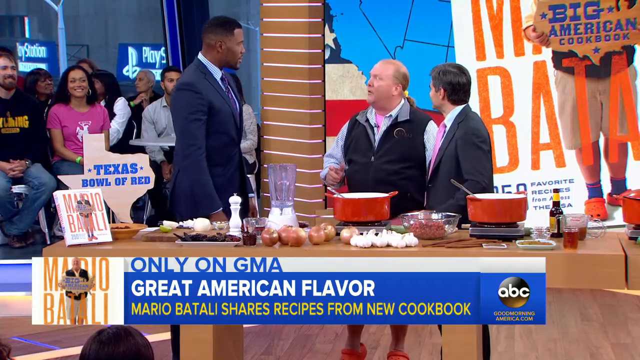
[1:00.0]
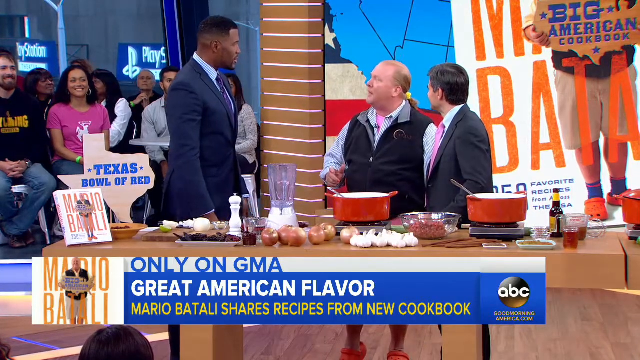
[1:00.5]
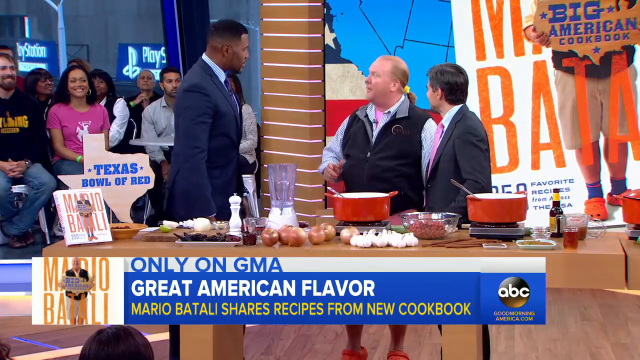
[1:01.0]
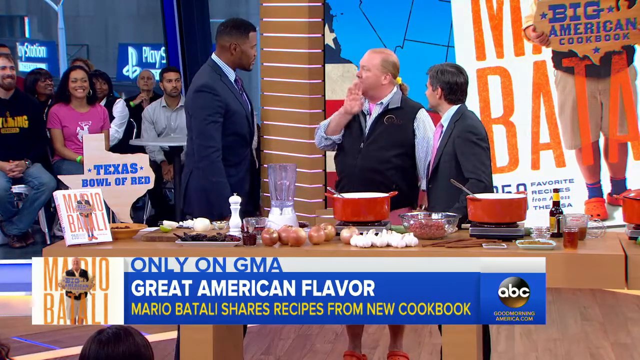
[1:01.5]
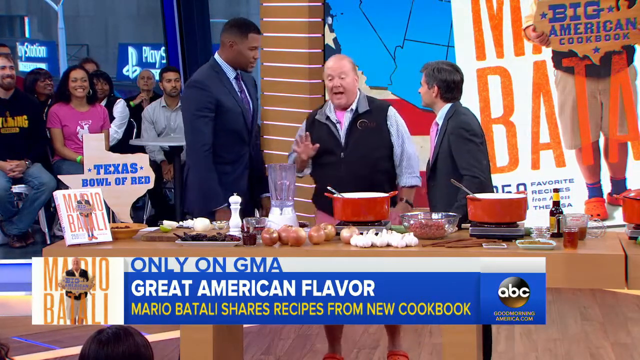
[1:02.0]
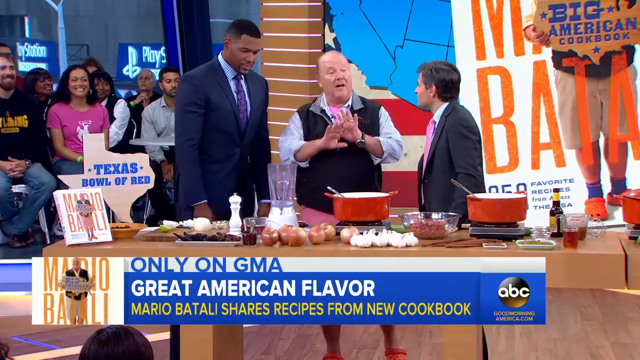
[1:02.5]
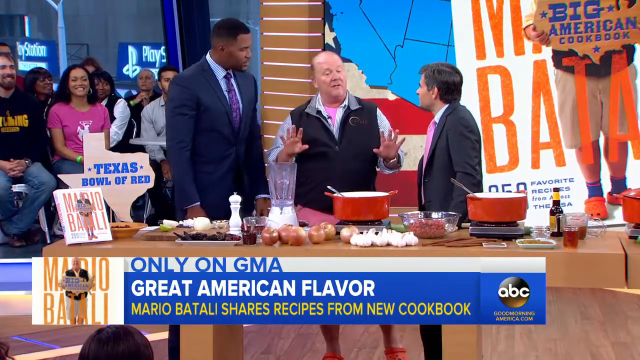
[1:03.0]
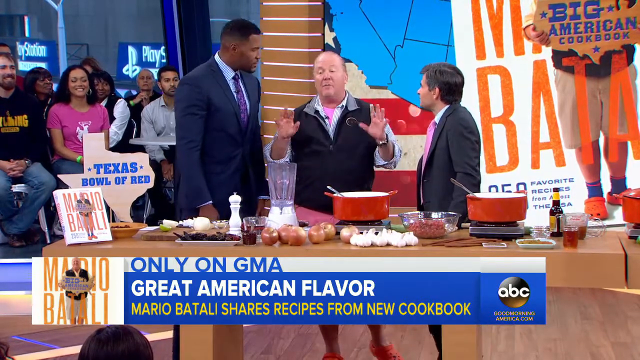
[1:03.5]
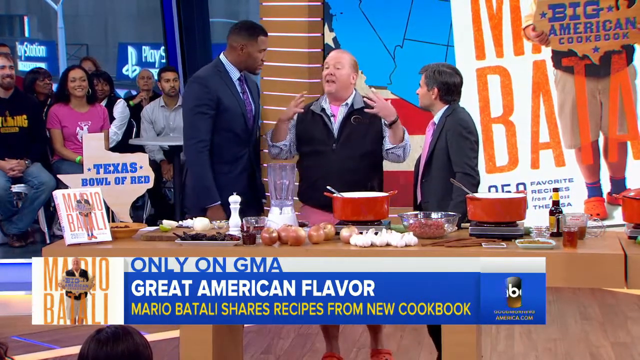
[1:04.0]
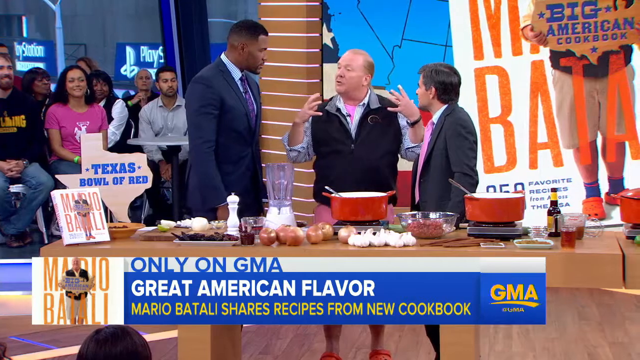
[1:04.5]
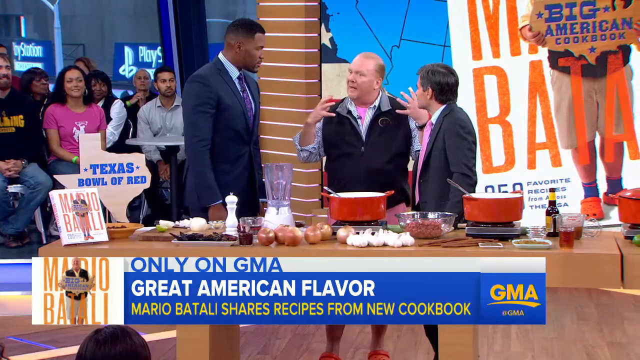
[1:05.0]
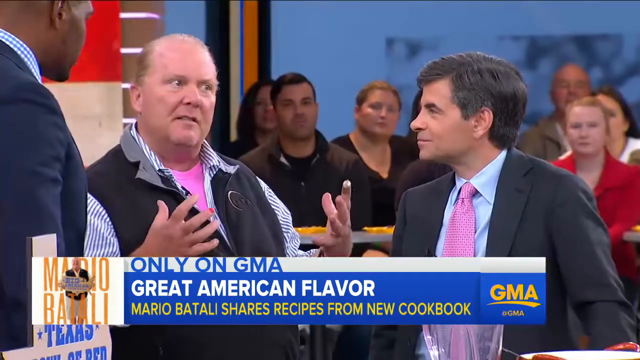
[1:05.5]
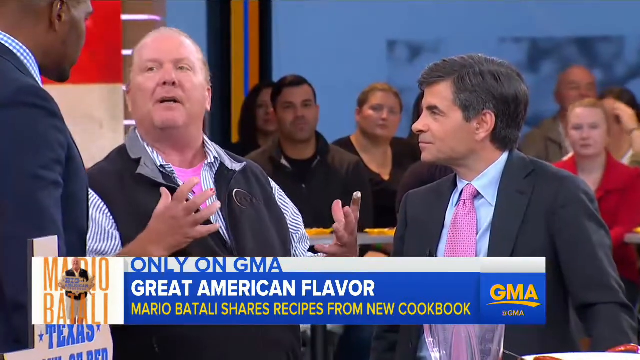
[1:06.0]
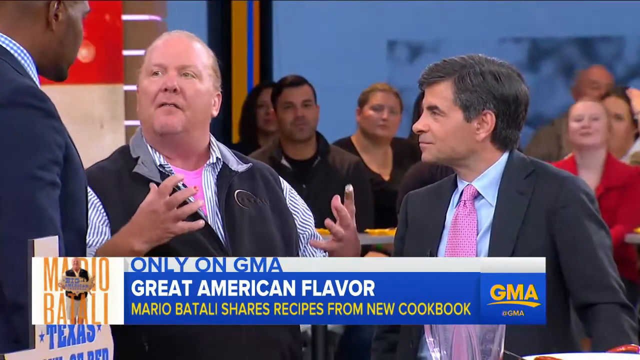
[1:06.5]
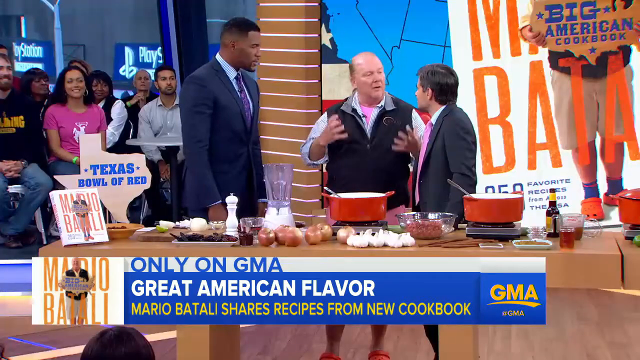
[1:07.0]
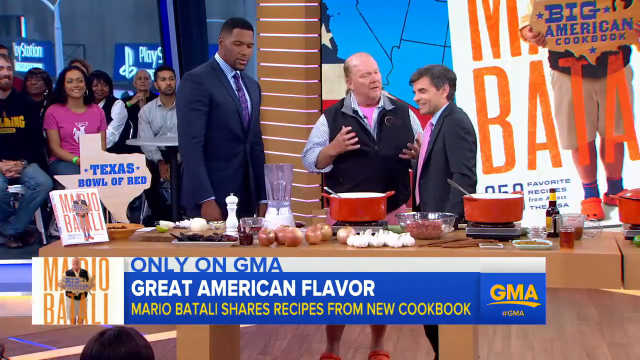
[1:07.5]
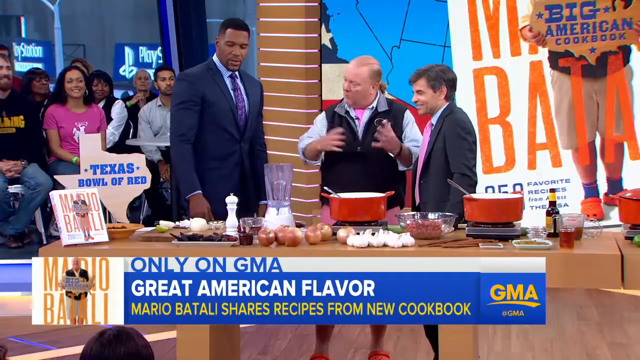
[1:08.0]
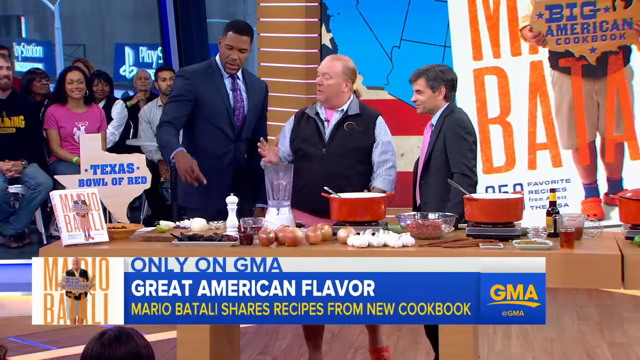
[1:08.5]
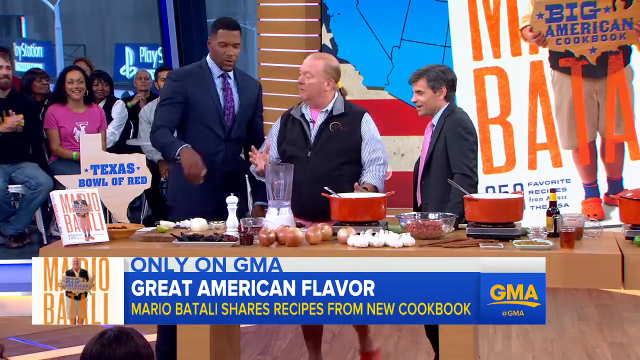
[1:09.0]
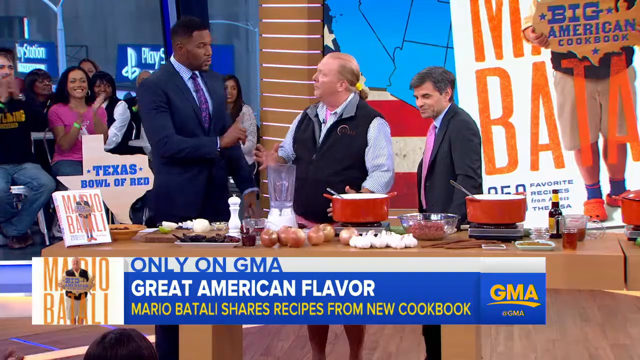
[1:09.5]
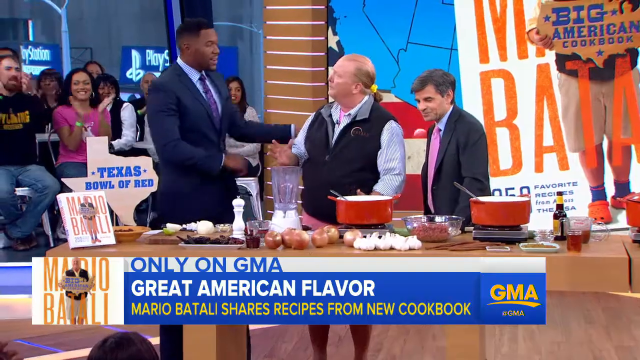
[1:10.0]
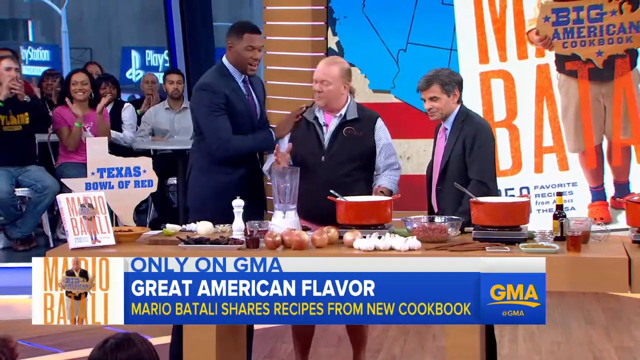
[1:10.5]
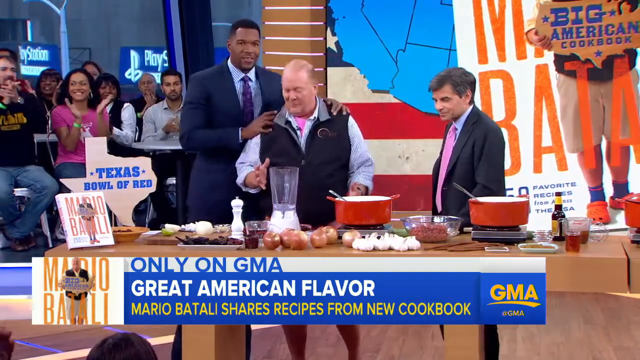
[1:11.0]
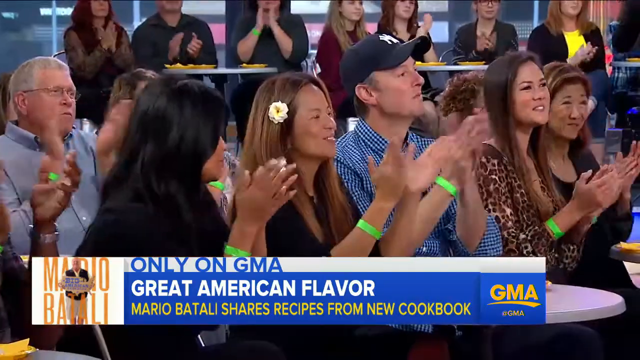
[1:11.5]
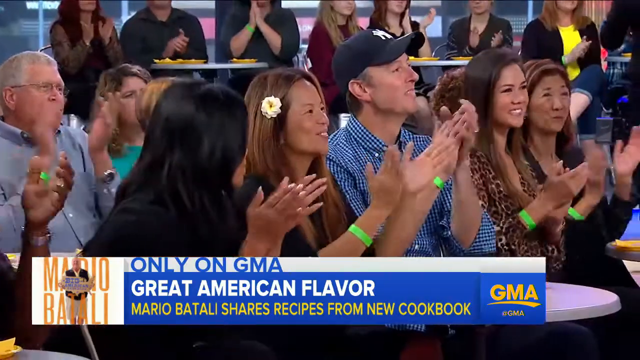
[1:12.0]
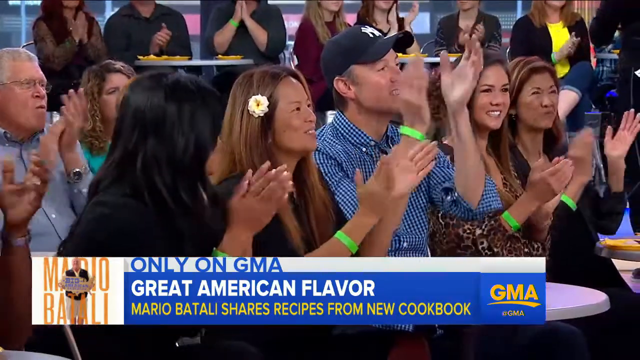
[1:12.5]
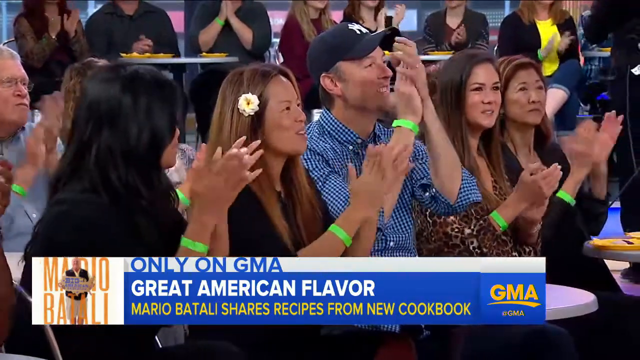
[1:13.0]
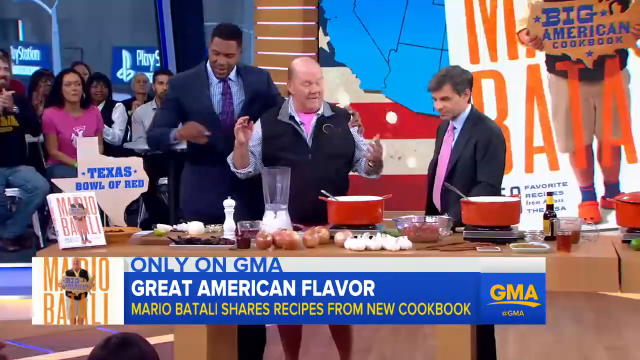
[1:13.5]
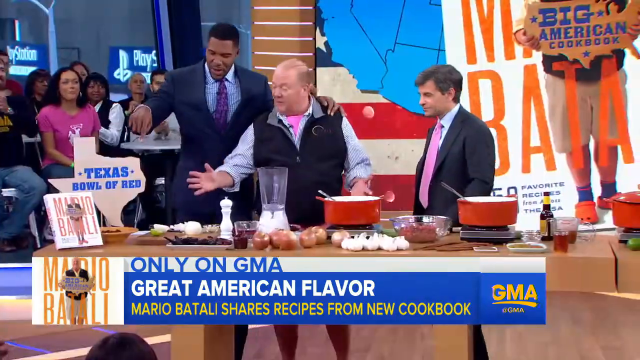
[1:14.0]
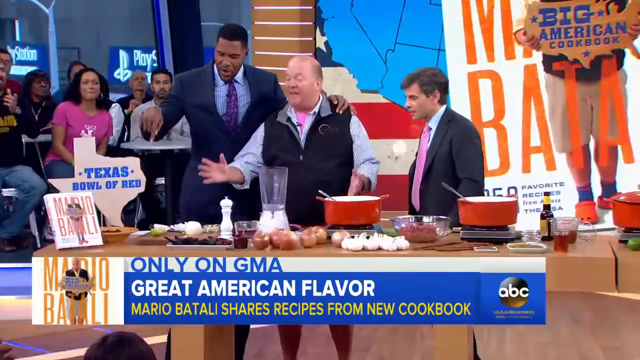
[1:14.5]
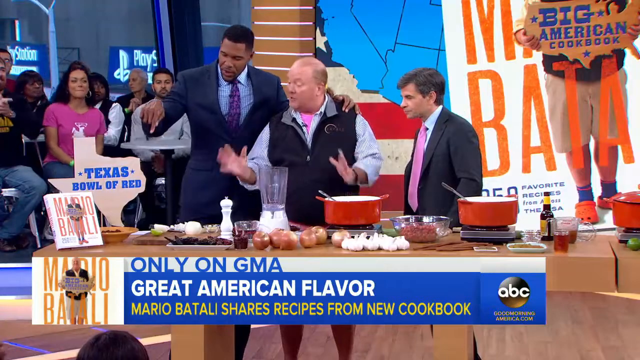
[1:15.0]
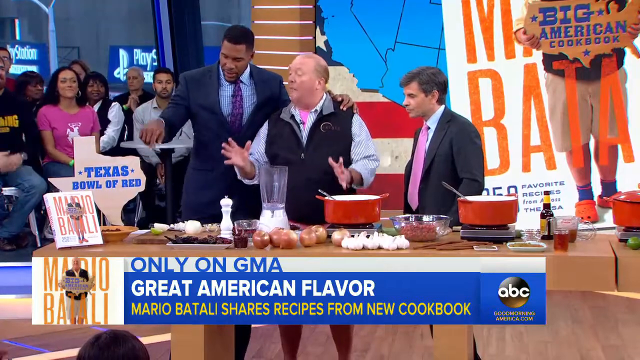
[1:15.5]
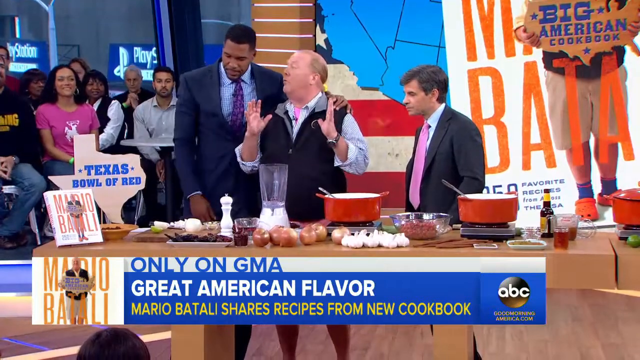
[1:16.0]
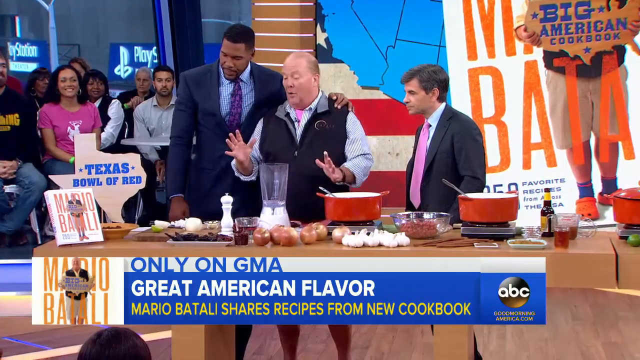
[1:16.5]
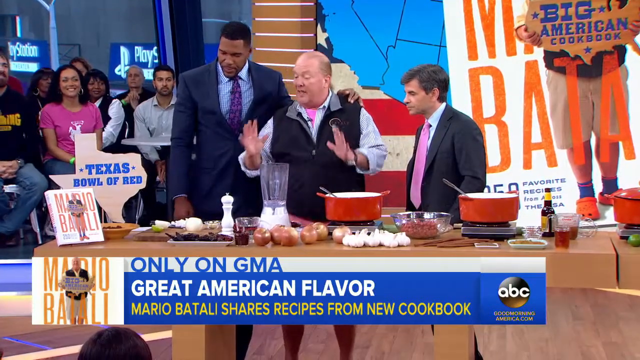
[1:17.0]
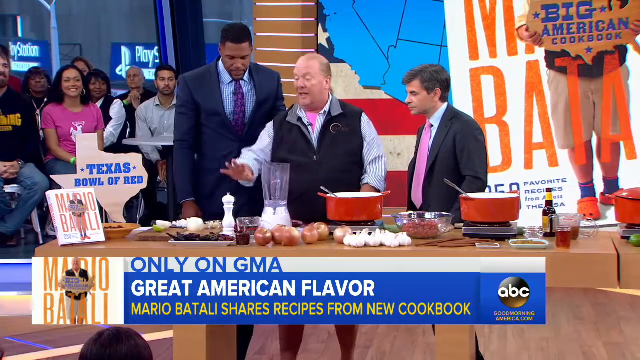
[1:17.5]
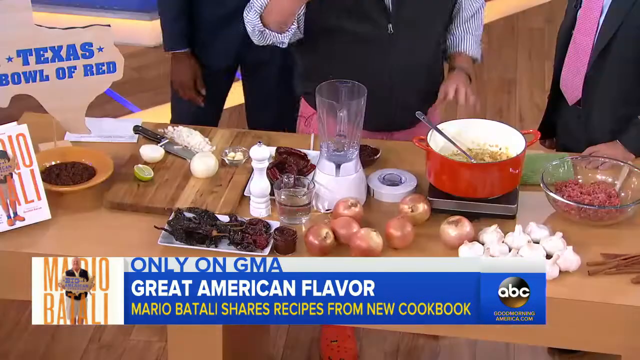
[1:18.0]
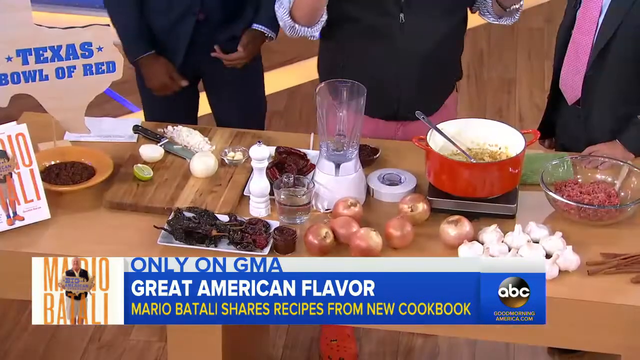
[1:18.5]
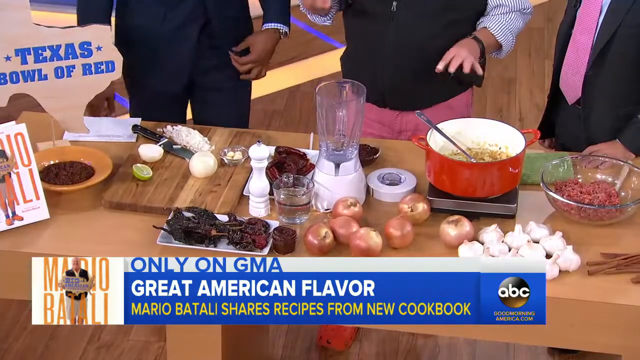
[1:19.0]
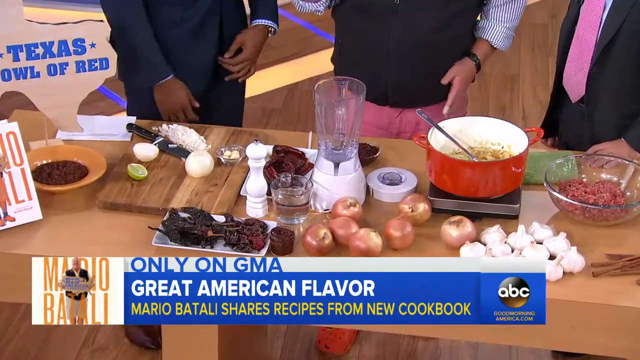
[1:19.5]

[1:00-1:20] The man with the ponytail looks up to his right, talking to the African-American man. He seems to nod, then seems about to whisper, then looks forward and down at his cookware and uses his hand to express what he is talking about. He flips his hands around and looks to his right as he talks, and the camera pans to his face. Everyone is talking, and the crowd behind him is smiling. The African-American man looks at the food, points at it, puts his finger up, puts his hand on his hip, and then pats the bald man and puts both hands around his shoulders. The camera pans to the crowd of men and women, old and young, who seem to be laughing, clapping and cheering. A woman has a flower petal on her head, and they all wear yellow wristbands.